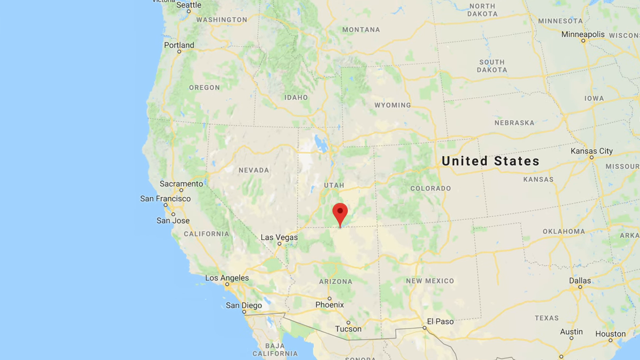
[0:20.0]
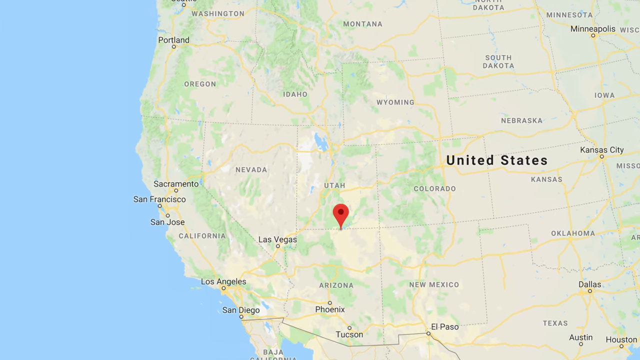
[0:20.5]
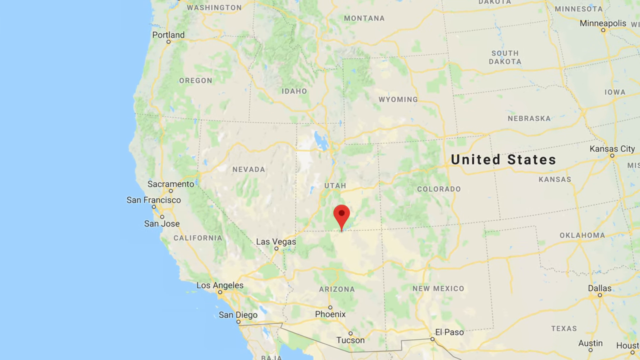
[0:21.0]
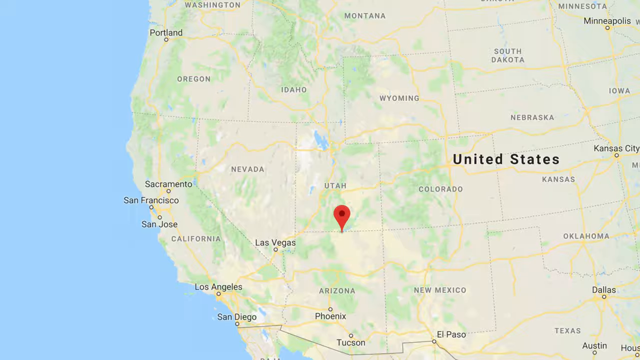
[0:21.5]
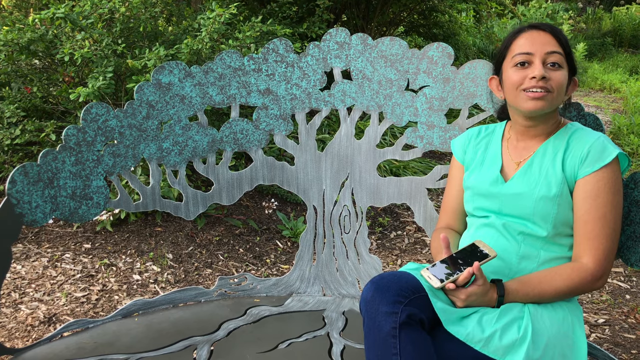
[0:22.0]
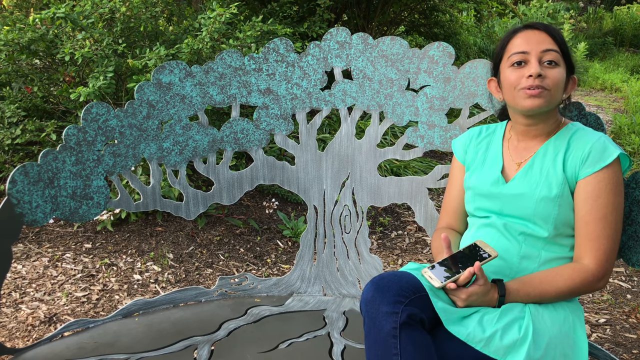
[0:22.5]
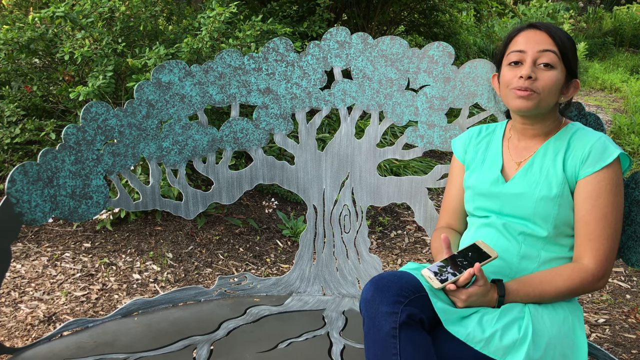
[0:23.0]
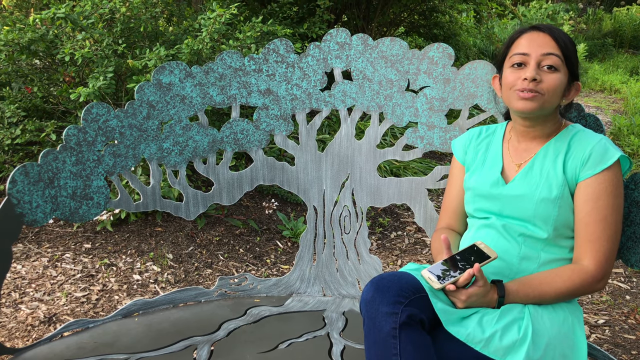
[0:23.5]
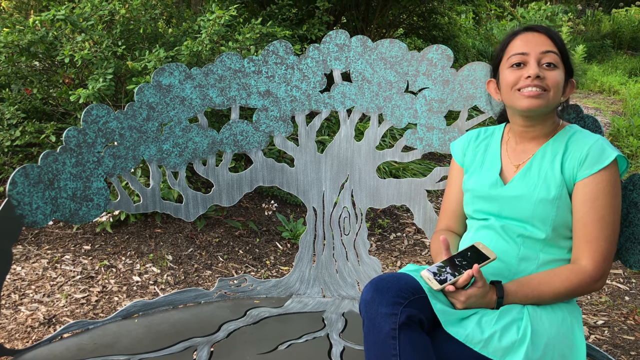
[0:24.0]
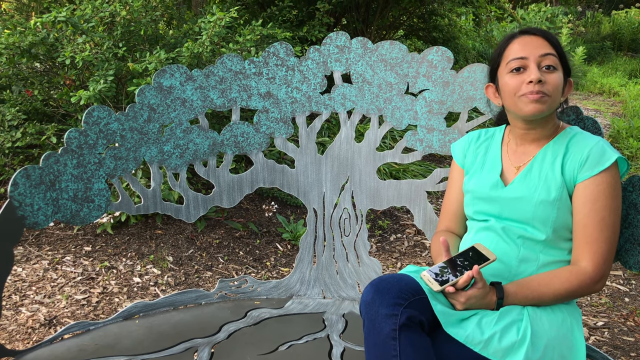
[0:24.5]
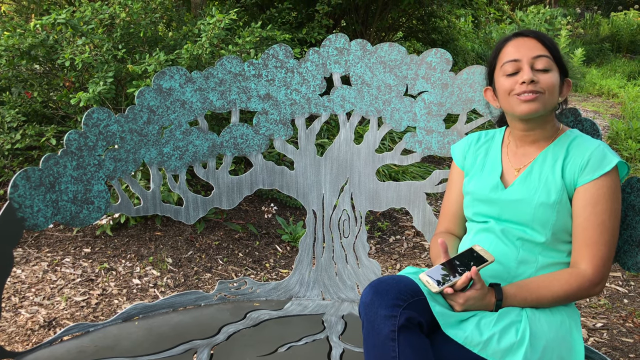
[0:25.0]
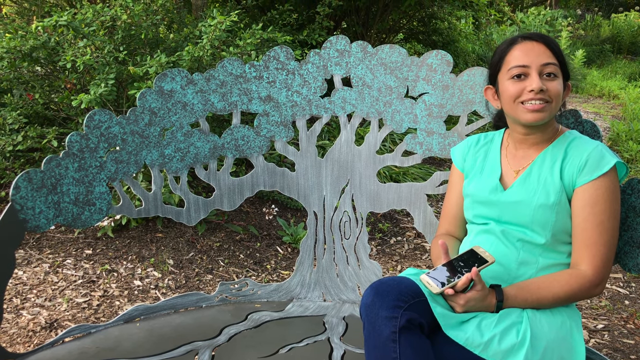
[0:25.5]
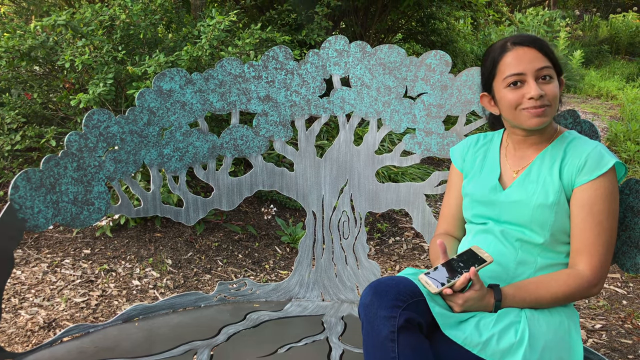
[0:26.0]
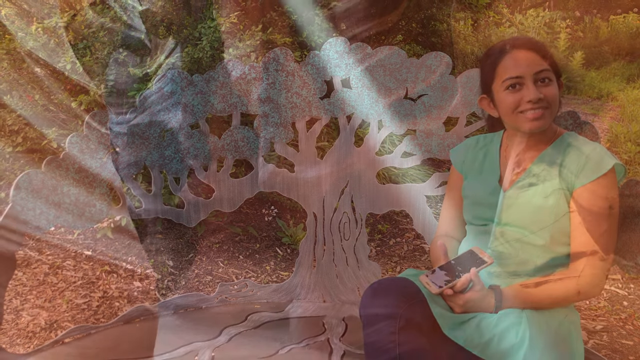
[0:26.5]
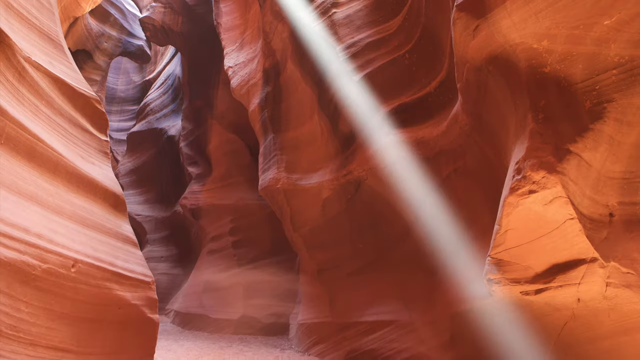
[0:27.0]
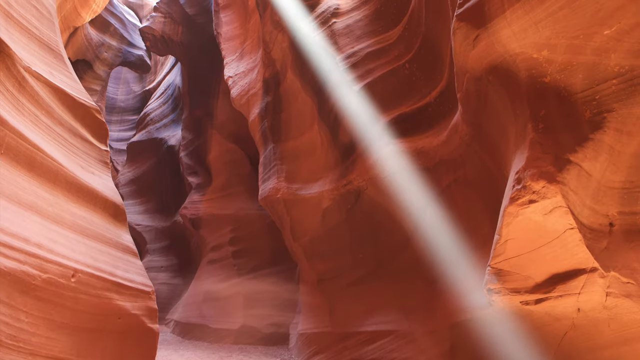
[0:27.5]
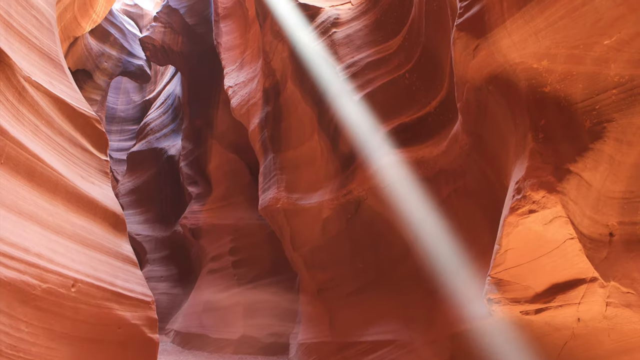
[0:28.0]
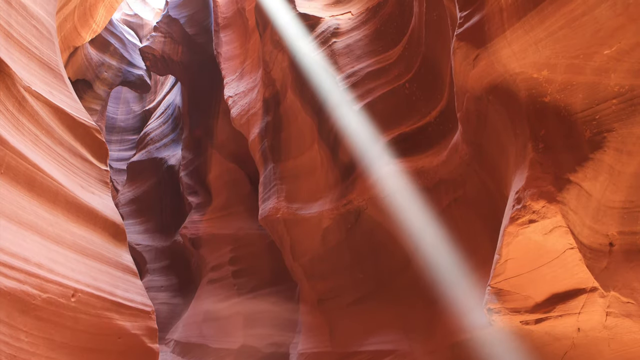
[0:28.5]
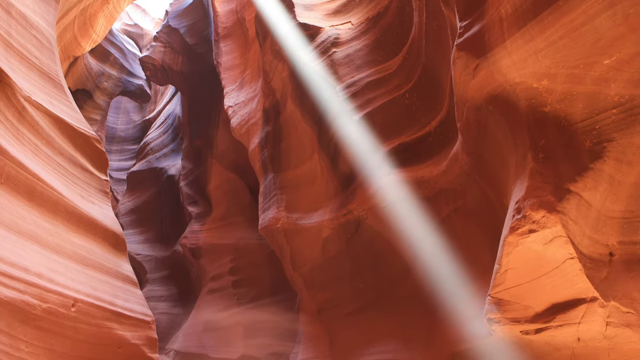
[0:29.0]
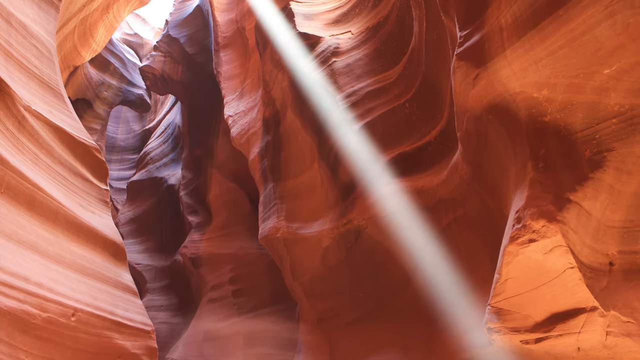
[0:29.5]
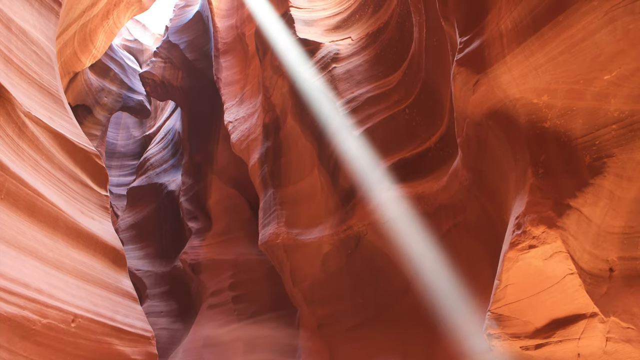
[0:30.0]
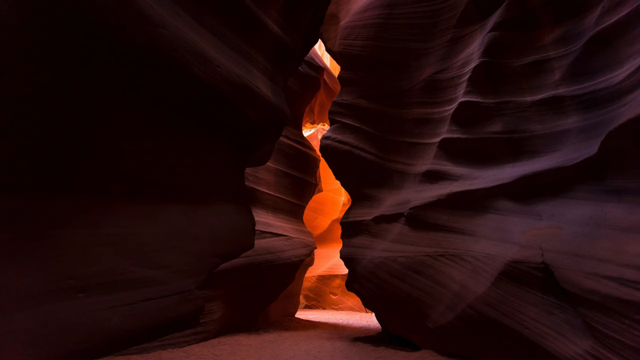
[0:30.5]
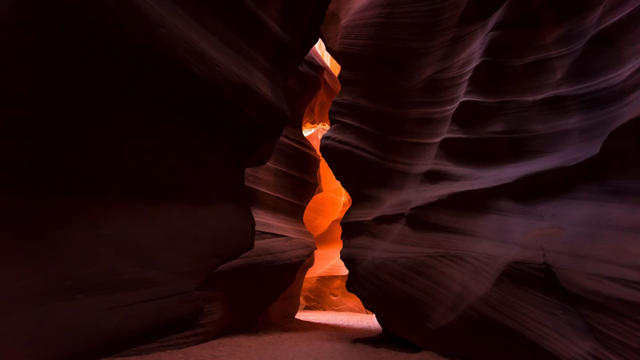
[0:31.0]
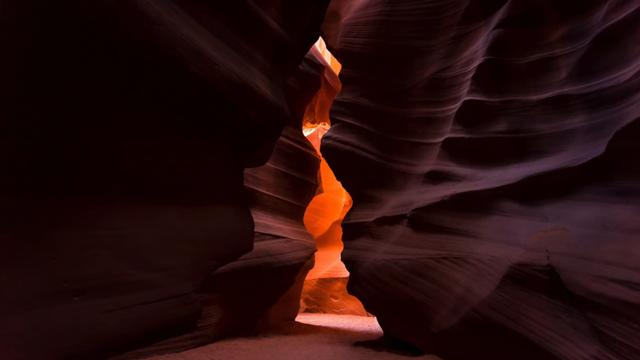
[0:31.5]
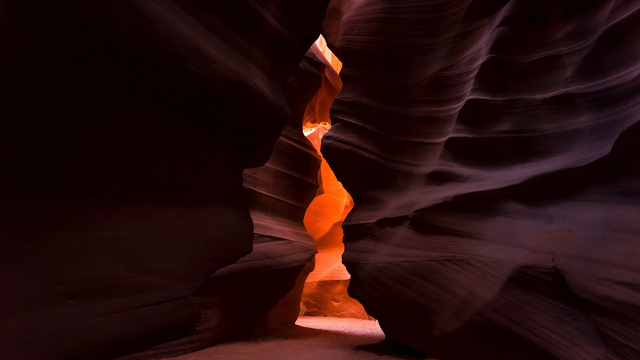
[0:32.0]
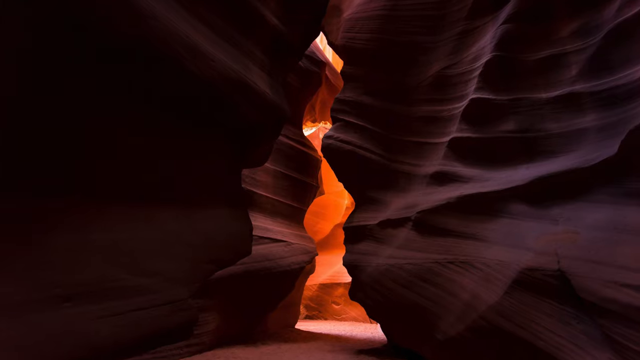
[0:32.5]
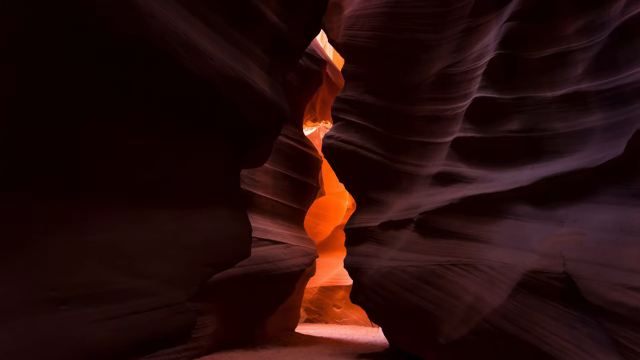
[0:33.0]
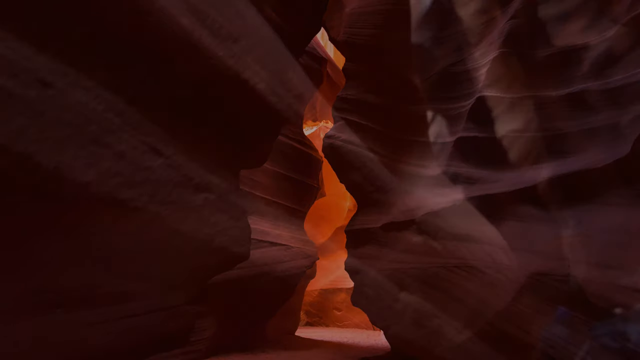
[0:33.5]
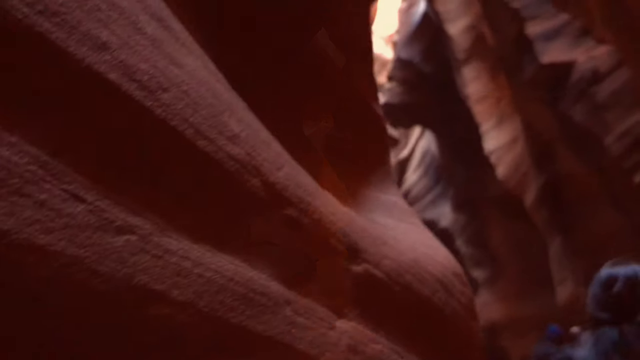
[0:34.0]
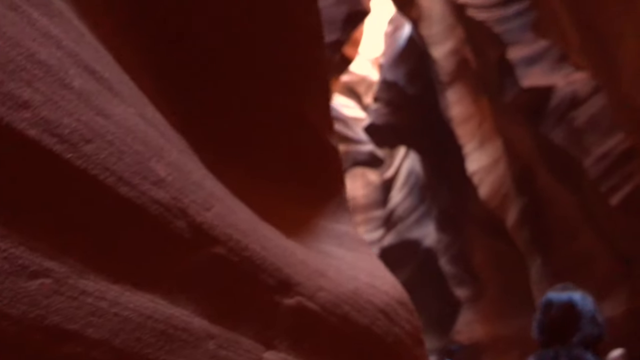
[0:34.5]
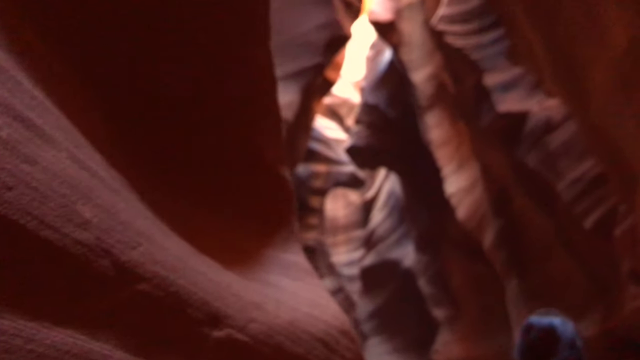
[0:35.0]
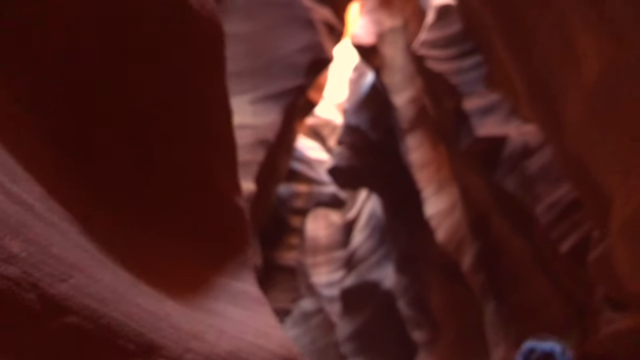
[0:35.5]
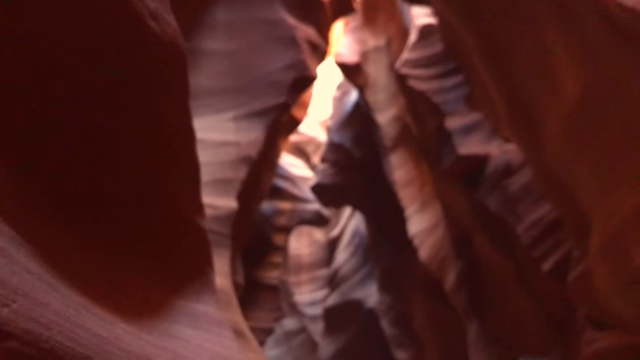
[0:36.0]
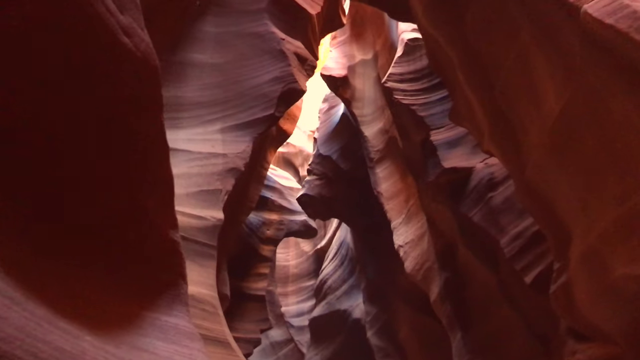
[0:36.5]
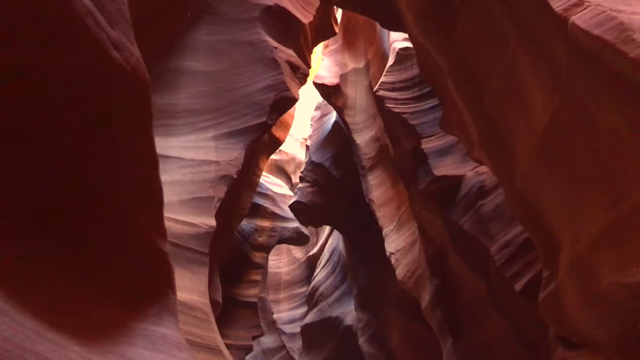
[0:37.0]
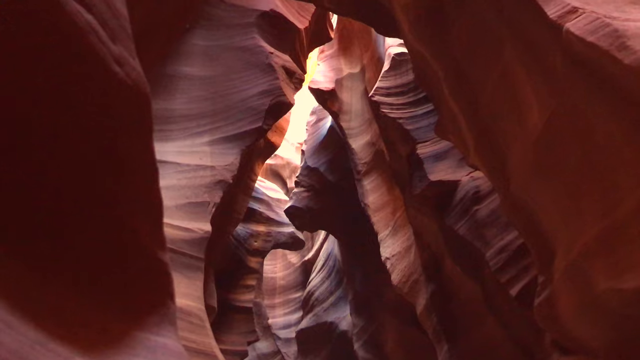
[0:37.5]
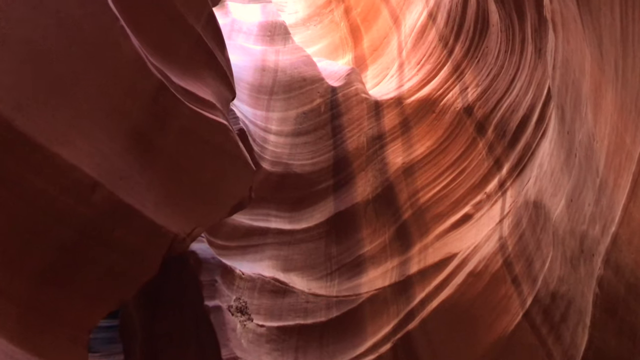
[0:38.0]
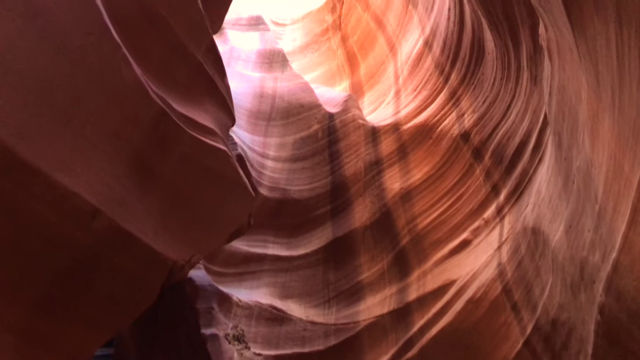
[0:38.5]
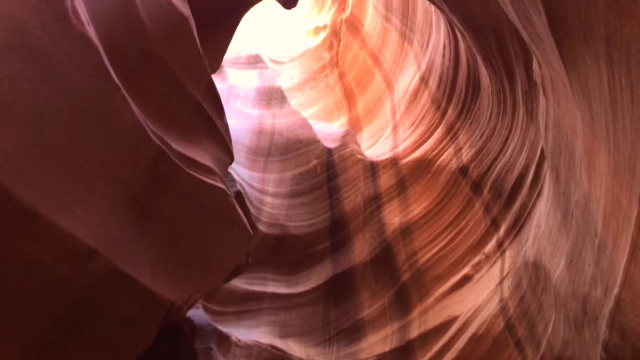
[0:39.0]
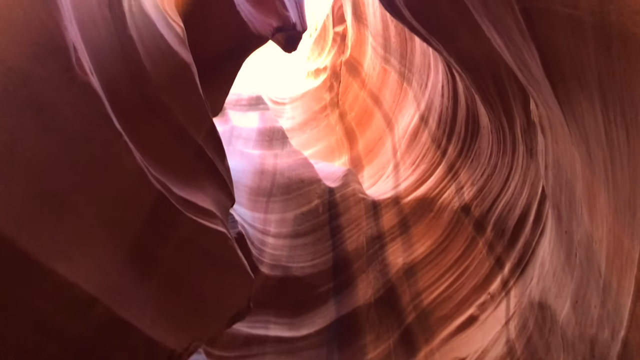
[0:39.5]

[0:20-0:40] The map of the United States shows labels including Oregon, Idaho, Nevada, Las Vegas, Arizona, New Mexico, Dallas, Oklahoma, Missouri, Kansas City, Kansas, Minneapolis, Minnesota, North Dakota, Montana and Washington, with the Pacific, blue in color, on the left of the map. The location is then Oregon. The woman appears again, holding her phone, in a blue dress and blue trousers with a black wristband on her left hand and long black hair, her eyes on the screen. On the other side is an illustration of a blue tree with many branches covering almost the entire screen, with a bush in the background. She is seated and explaining something, gesturing with her head. Next come desert features and a ray of light beaming down to the ground, then a cave with light red columns inside. The camera zooms in on the excavations and crevices inside the cave, and the sky is visible outside the cave.